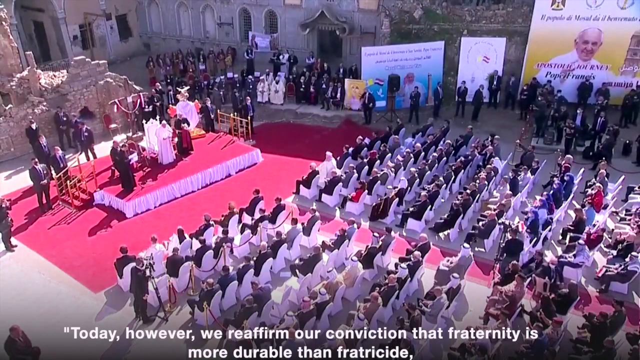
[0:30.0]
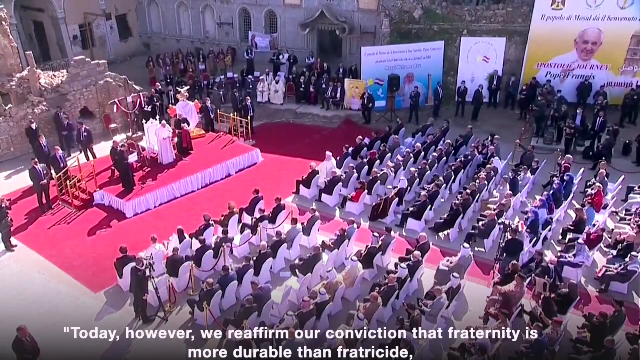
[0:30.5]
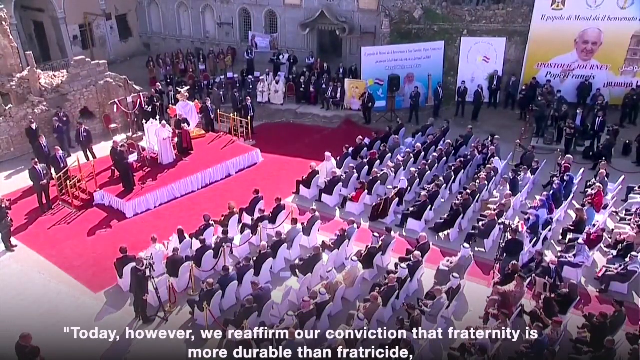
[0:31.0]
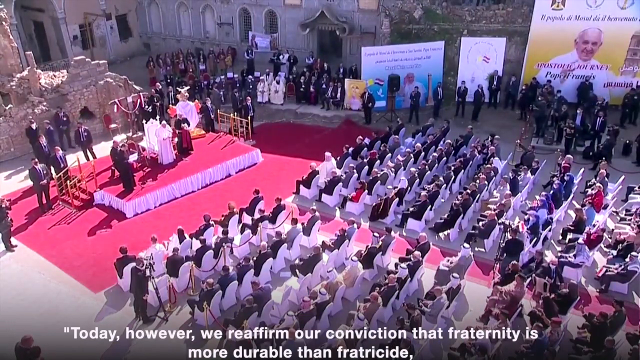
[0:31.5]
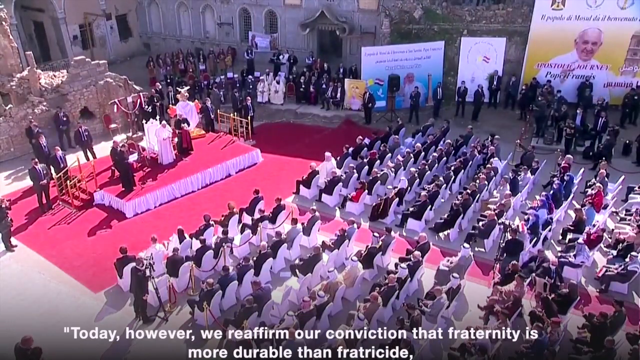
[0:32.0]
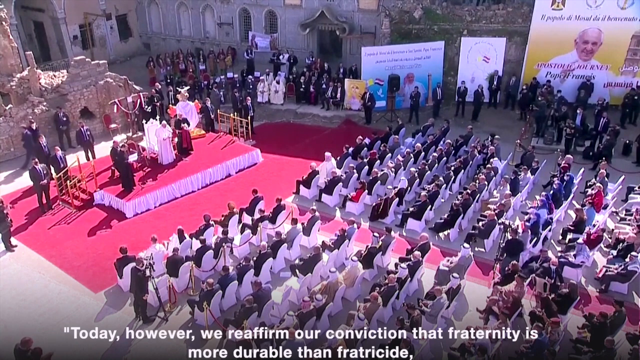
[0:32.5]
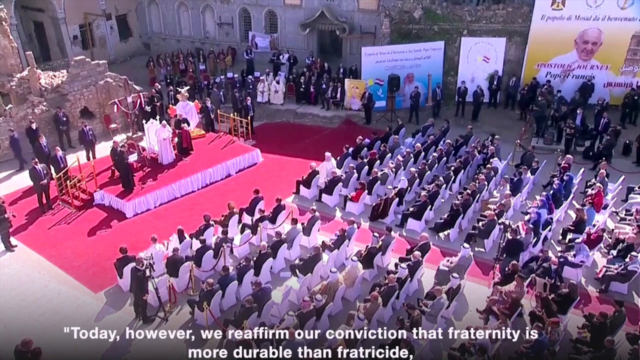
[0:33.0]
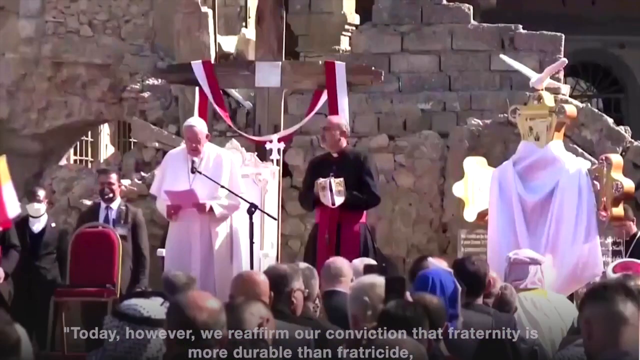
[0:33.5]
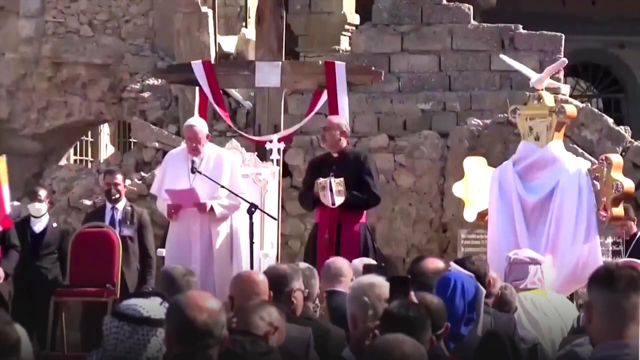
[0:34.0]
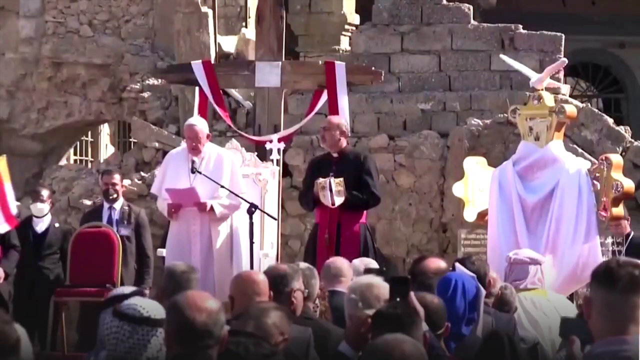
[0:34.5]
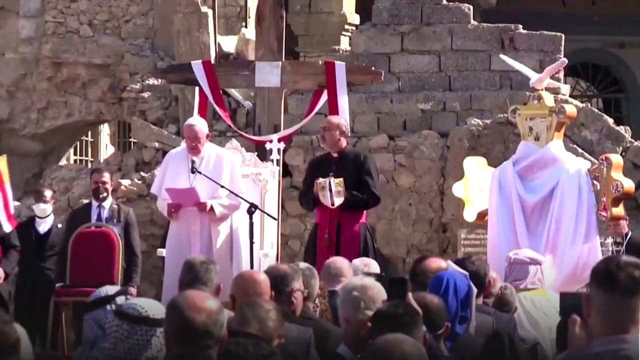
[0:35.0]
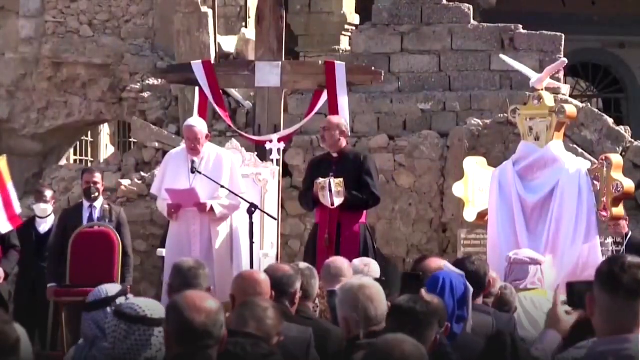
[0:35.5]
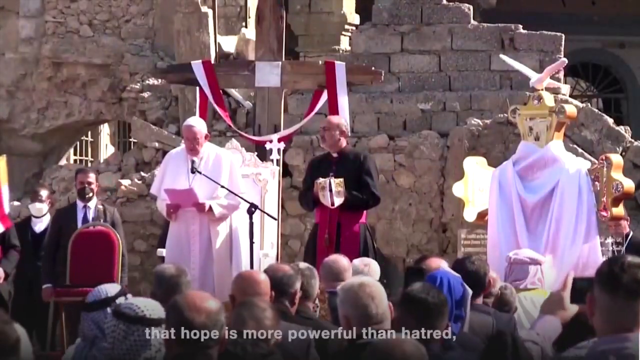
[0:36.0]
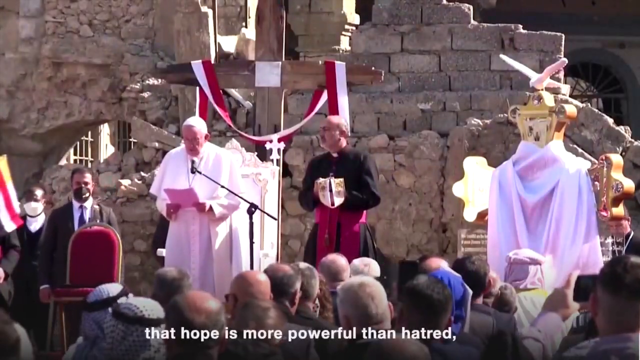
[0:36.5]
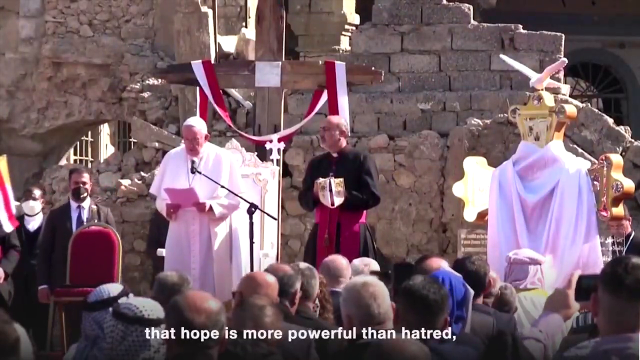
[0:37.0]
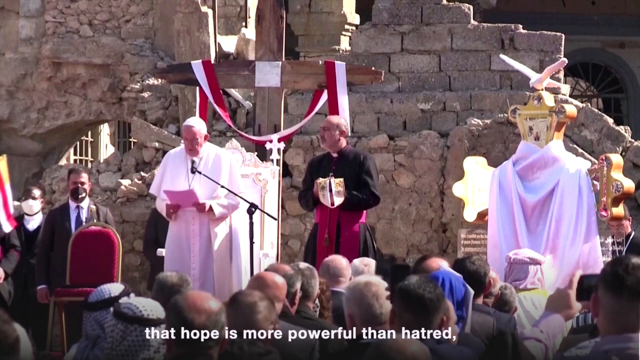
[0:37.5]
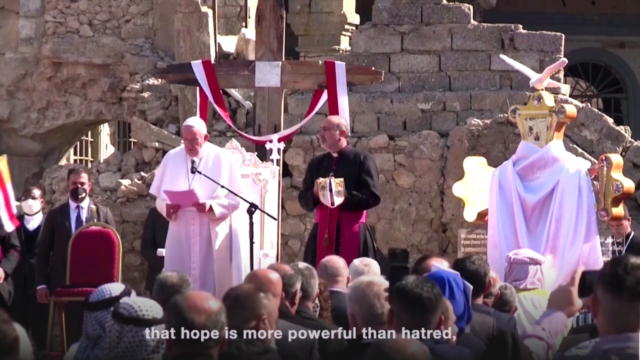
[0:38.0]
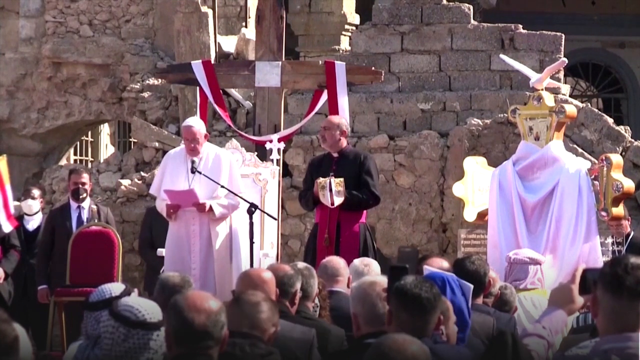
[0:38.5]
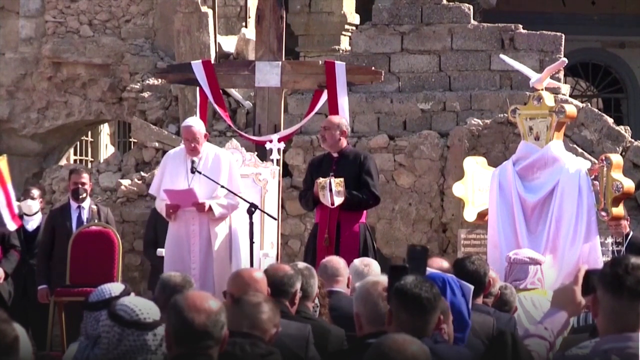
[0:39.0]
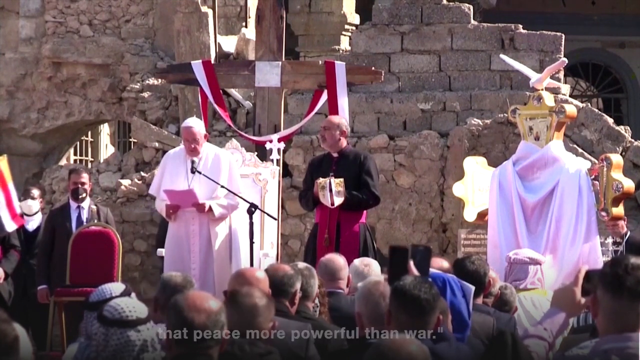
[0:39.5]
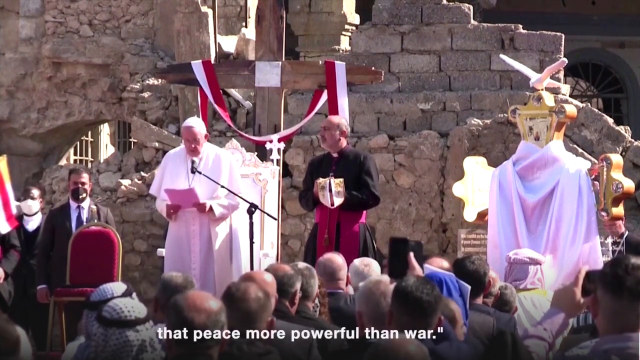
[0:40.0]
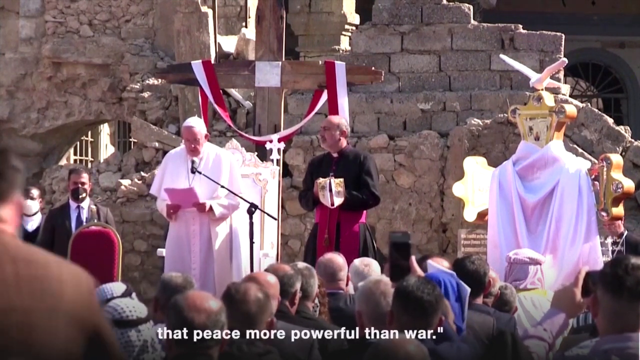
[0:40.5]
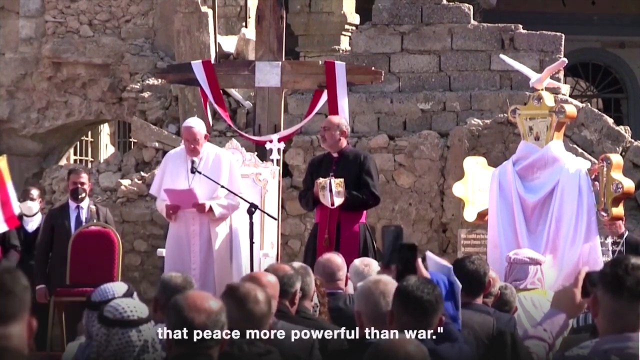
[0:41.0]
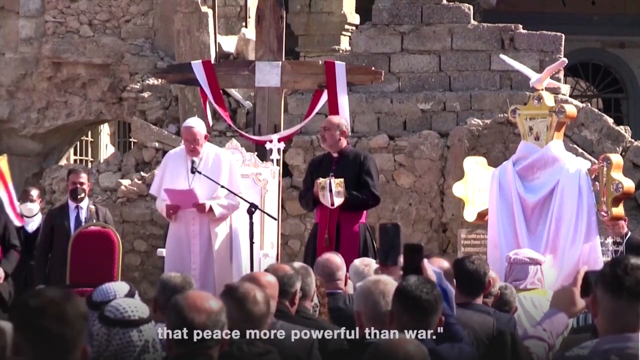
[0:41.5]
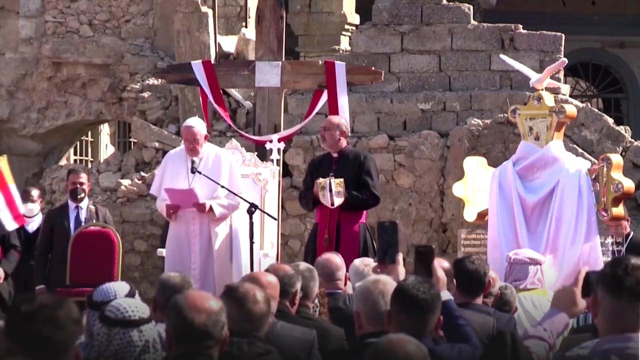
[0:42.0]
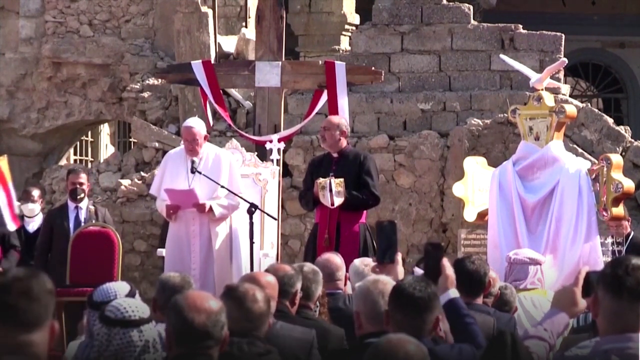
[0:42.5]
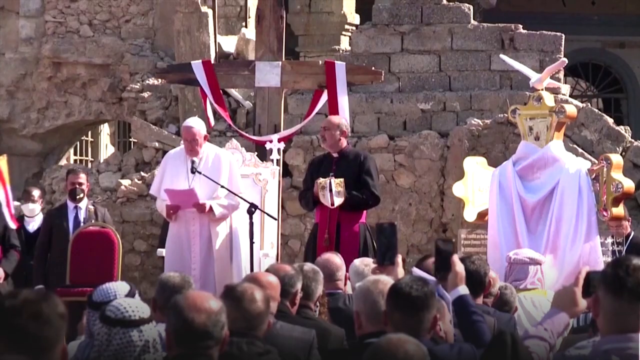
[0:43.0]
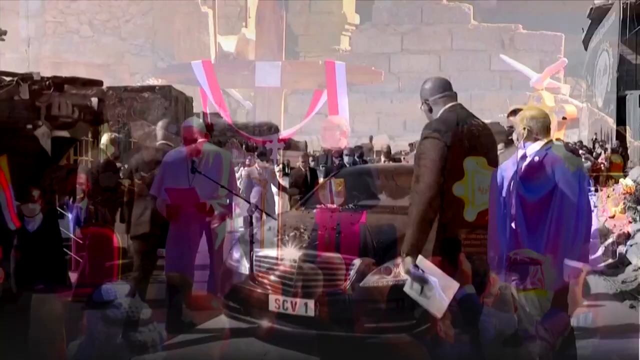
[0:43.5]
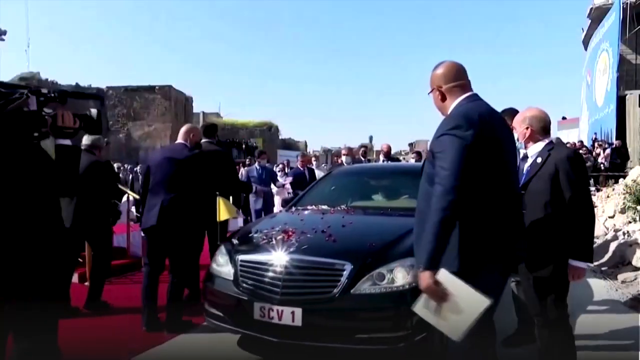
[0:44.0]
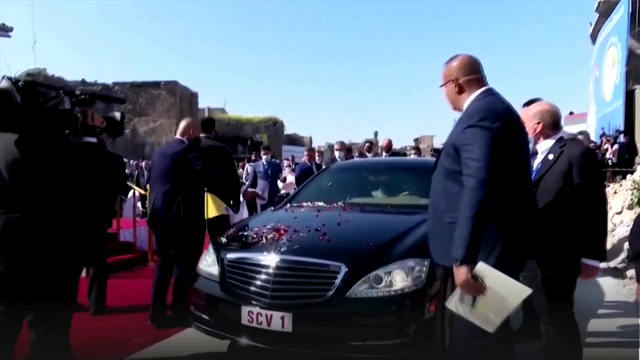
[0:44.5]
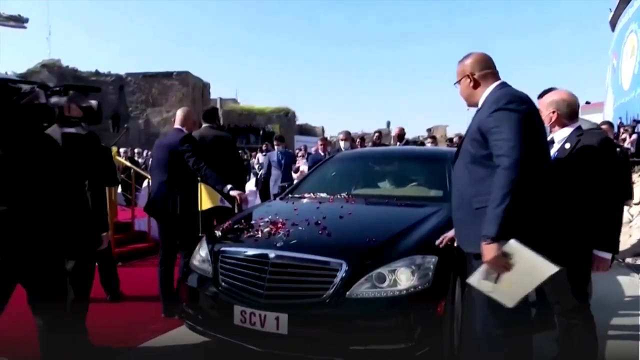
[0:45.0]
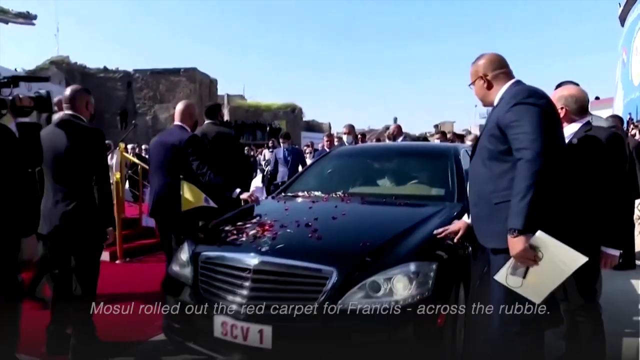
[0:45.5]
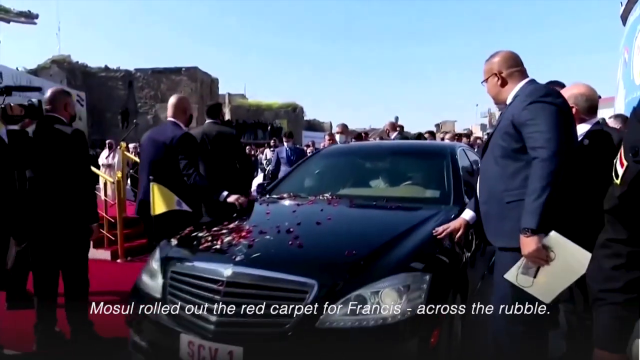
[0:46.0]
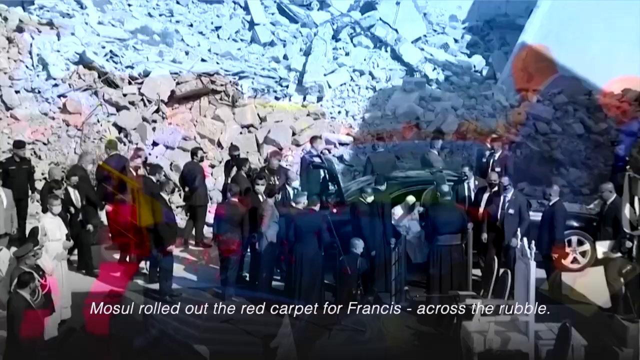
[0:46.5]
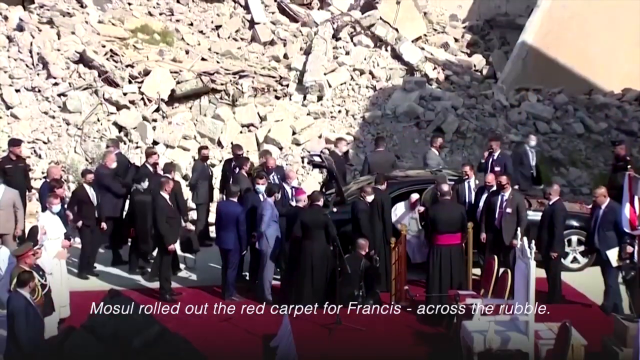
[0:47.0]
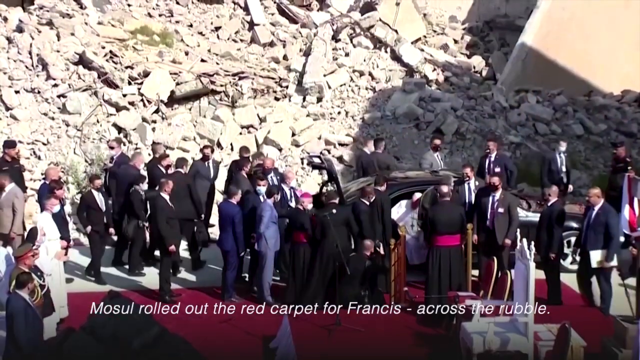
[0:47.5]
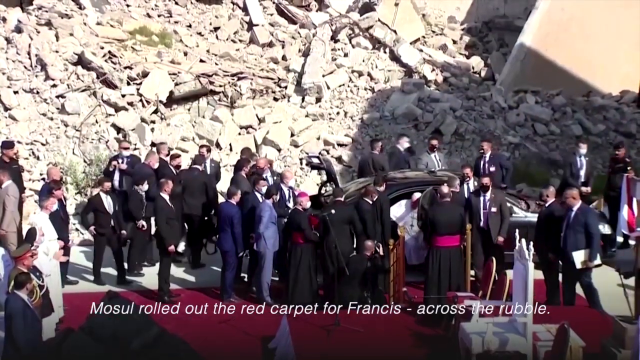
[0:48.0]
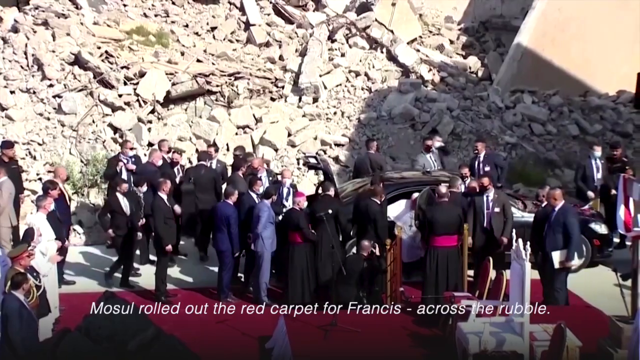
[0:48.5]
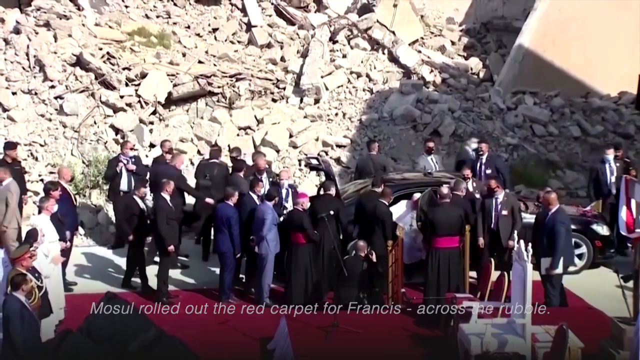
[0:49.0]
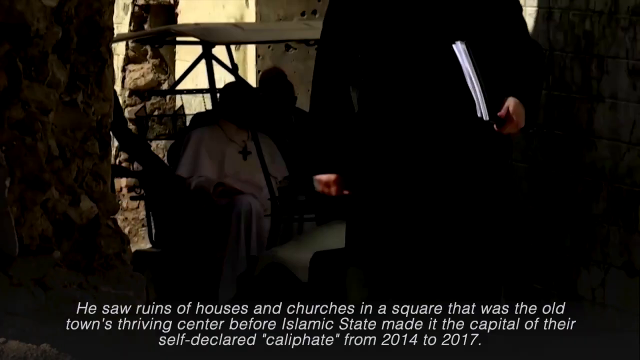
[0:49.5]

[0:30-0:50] The Pope talks into the microphone, apparently giving a speech to the gathered audience in front of his little throne. Behind him is a large cross with a red and white kind of sash around its crossbar, and there is a gold and white structure off to the side. After he appears to finish the speech, a black car moves forward and Pope Francis is put into the back of it. The car appears to make its way slowly through the street, with people still crowded all around. Lastly, Pope Francis is apparently put onto a slow-moving golf cart to be transported somewhere else. He wears the same white outfit with the little white hat the whole time.